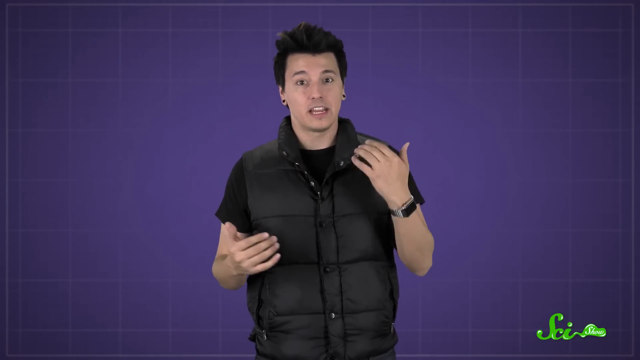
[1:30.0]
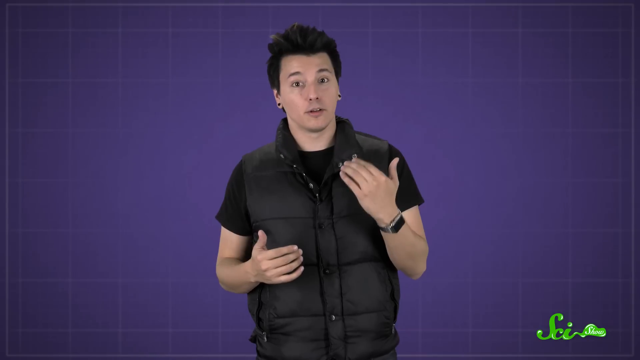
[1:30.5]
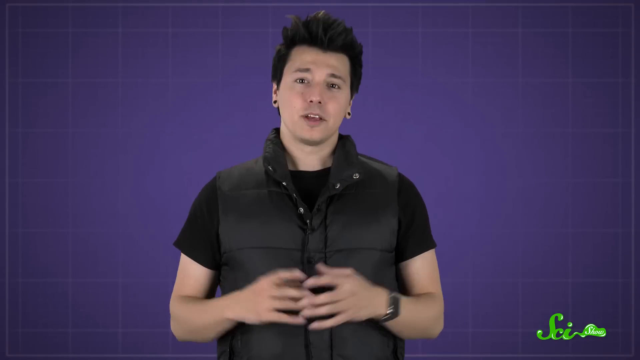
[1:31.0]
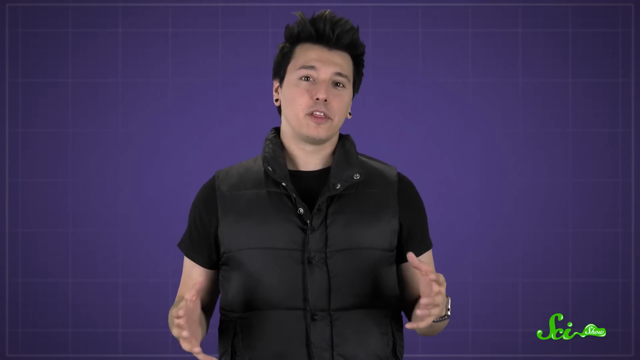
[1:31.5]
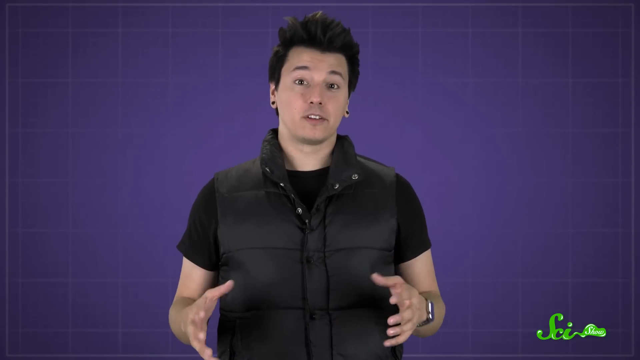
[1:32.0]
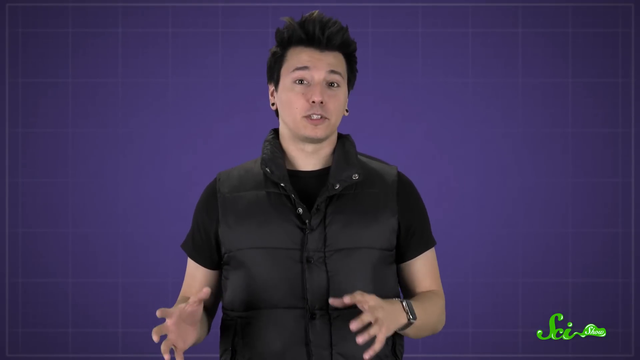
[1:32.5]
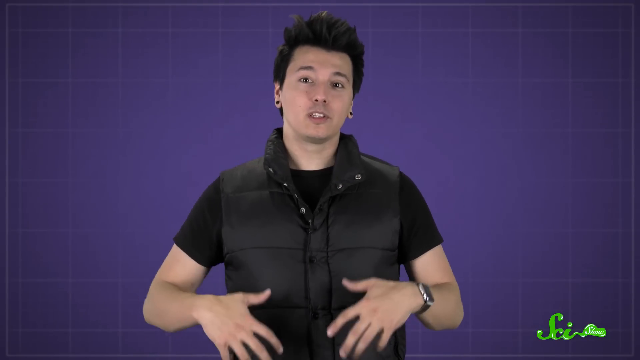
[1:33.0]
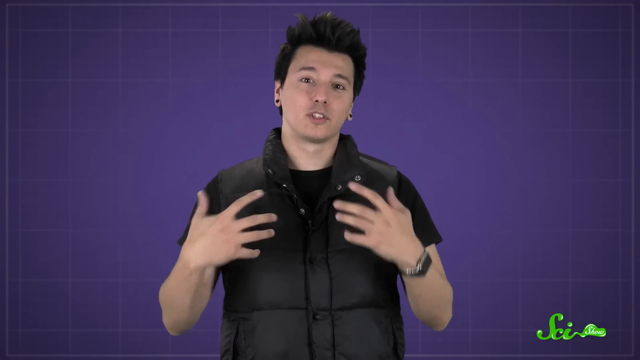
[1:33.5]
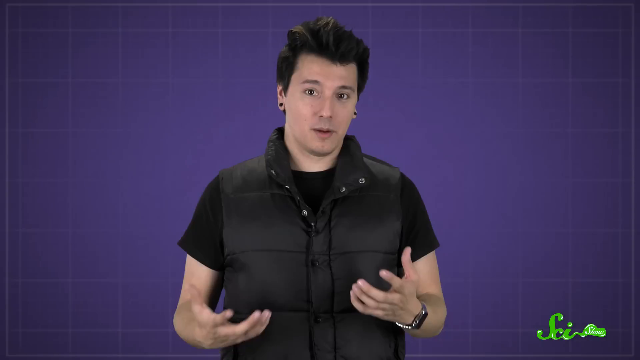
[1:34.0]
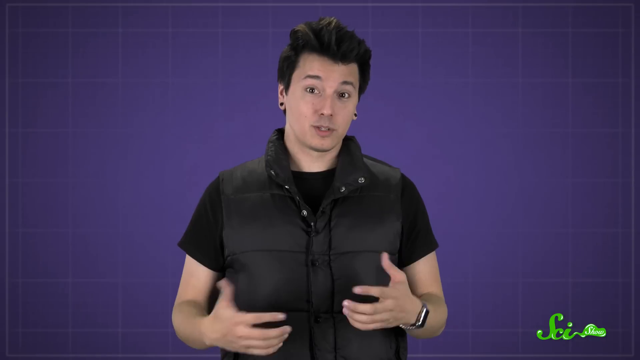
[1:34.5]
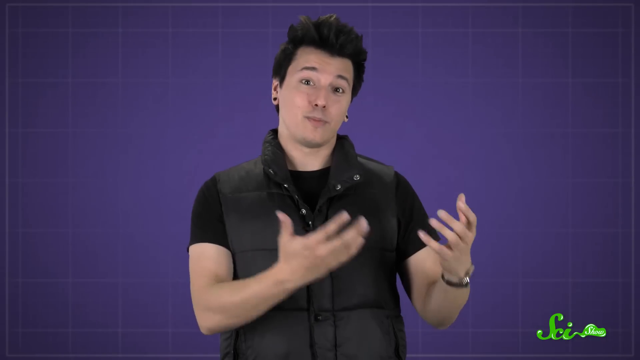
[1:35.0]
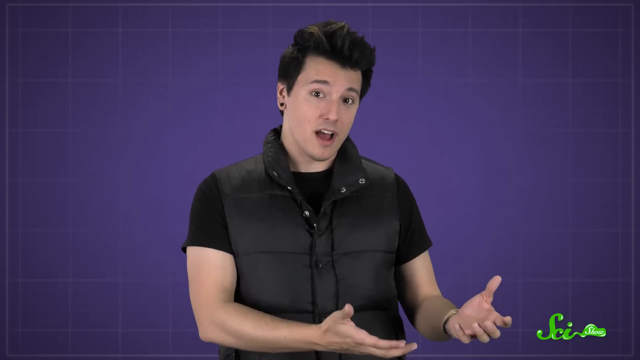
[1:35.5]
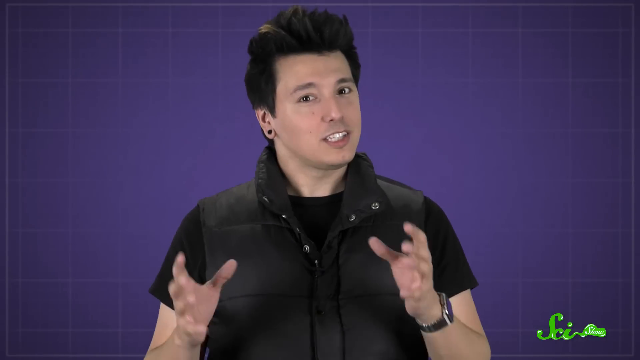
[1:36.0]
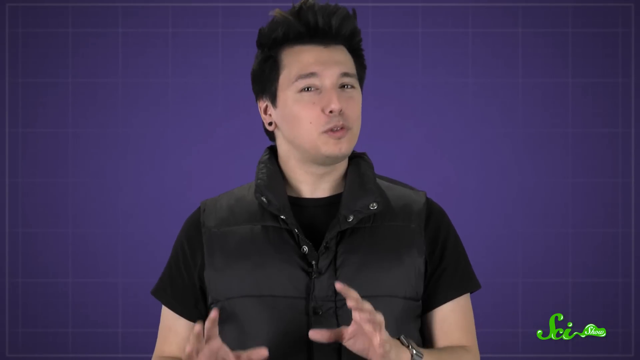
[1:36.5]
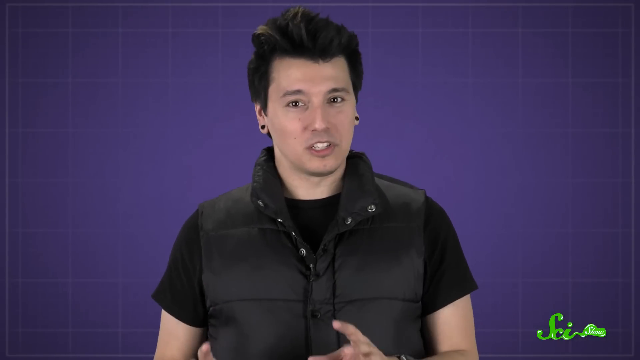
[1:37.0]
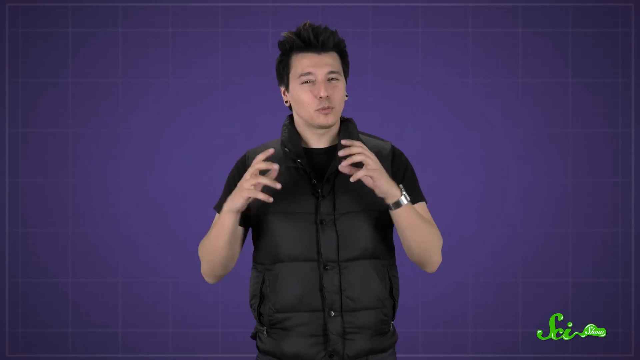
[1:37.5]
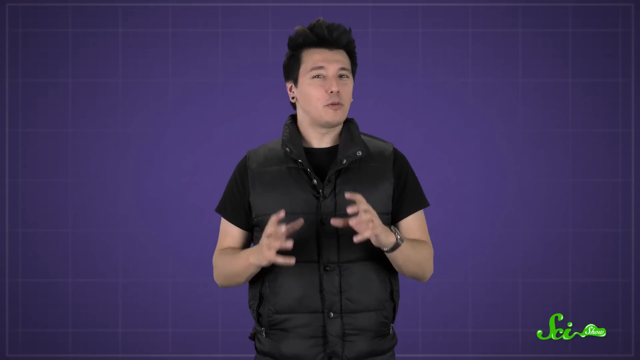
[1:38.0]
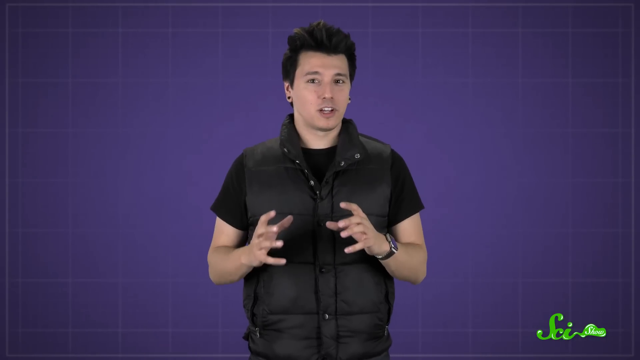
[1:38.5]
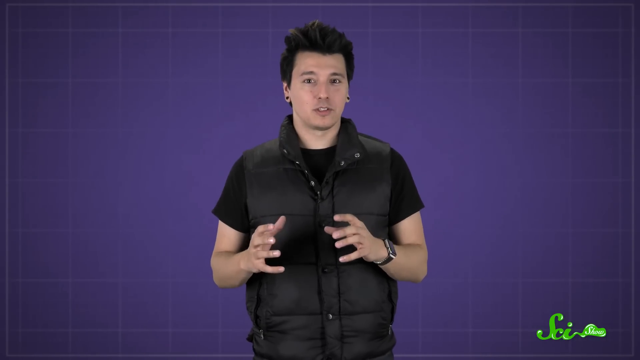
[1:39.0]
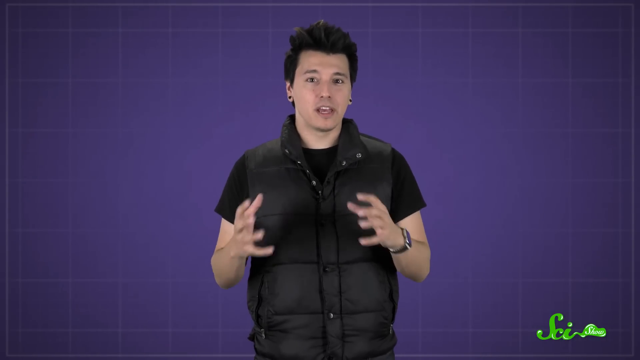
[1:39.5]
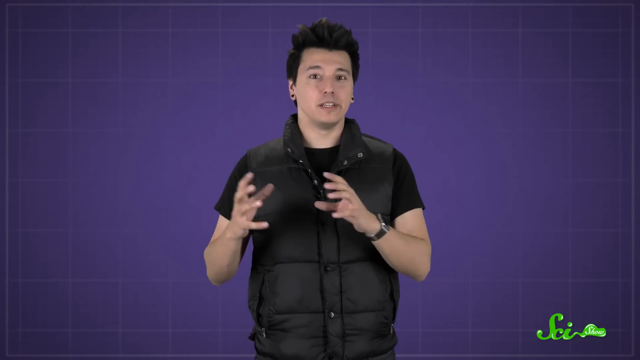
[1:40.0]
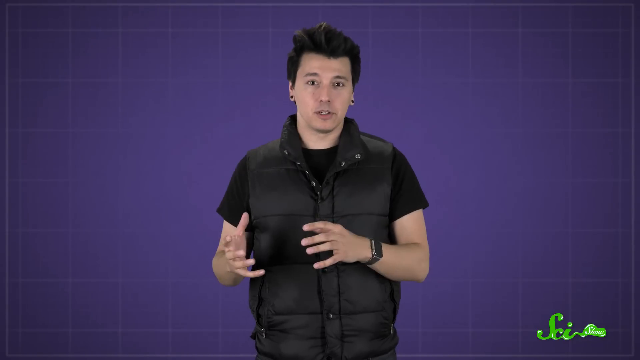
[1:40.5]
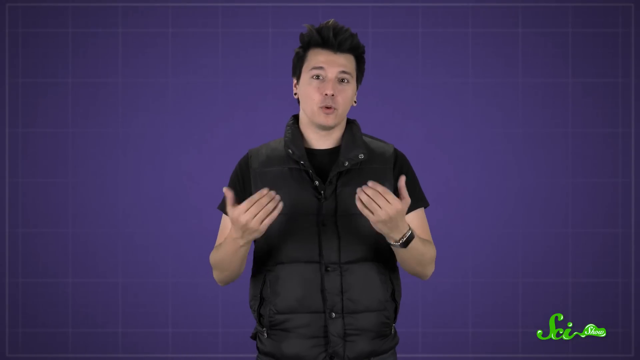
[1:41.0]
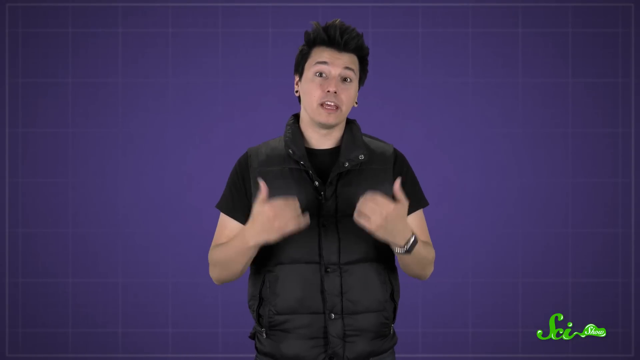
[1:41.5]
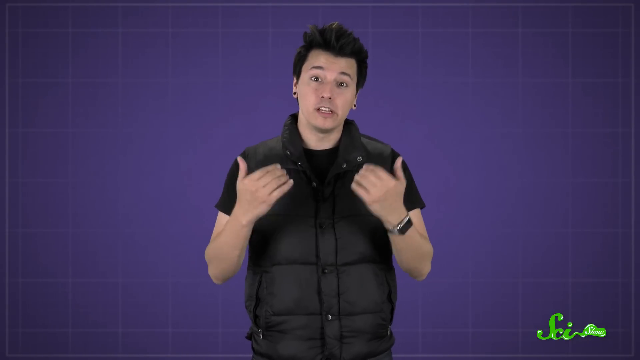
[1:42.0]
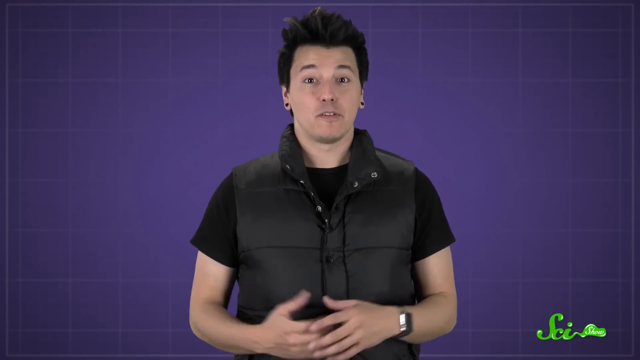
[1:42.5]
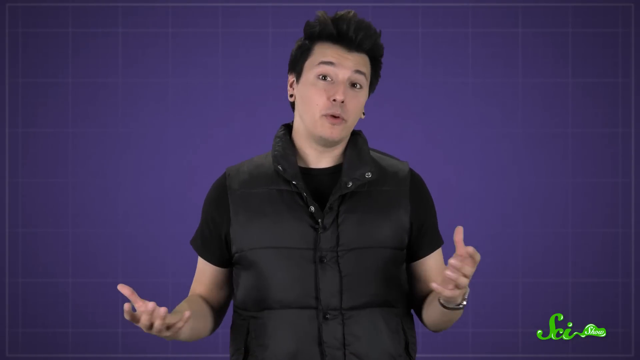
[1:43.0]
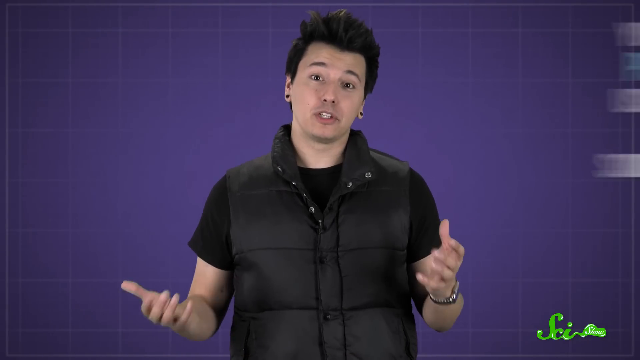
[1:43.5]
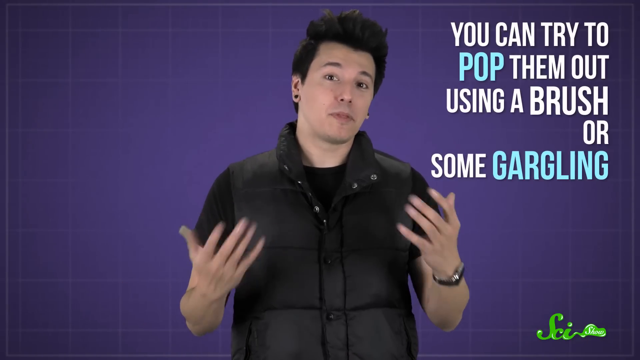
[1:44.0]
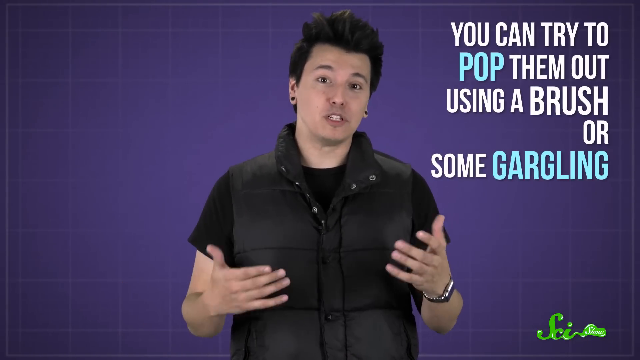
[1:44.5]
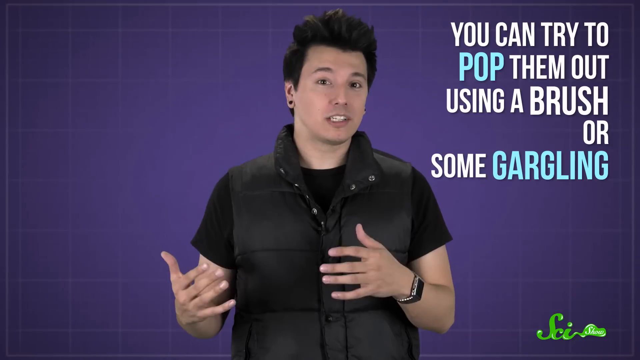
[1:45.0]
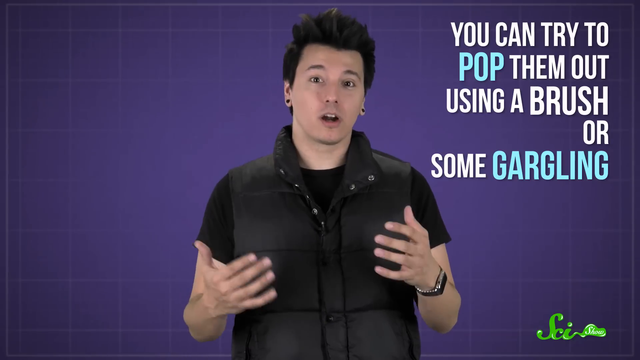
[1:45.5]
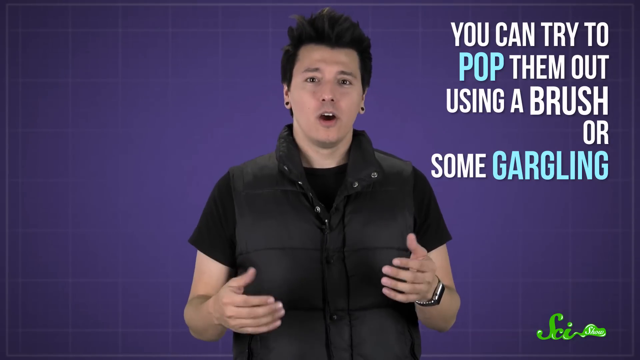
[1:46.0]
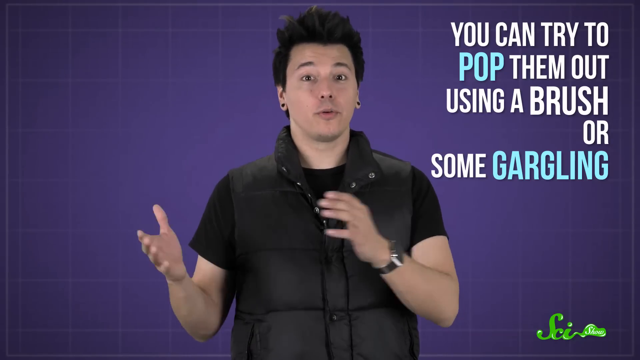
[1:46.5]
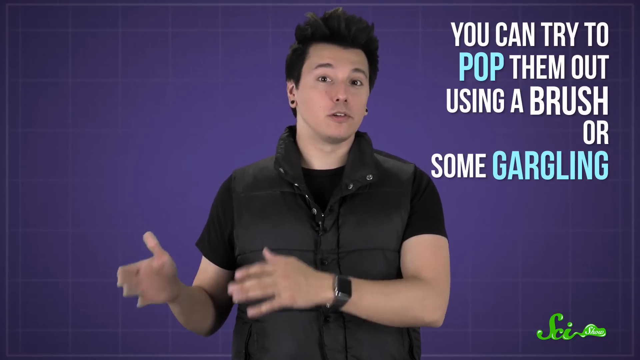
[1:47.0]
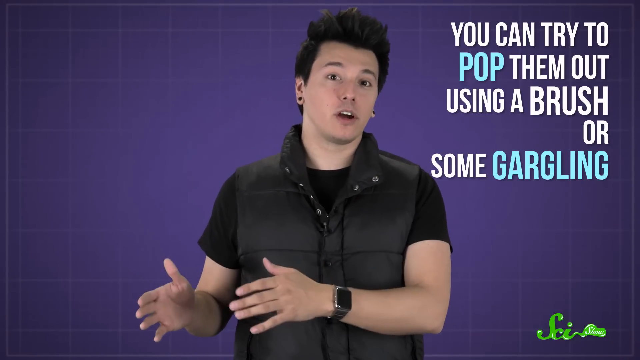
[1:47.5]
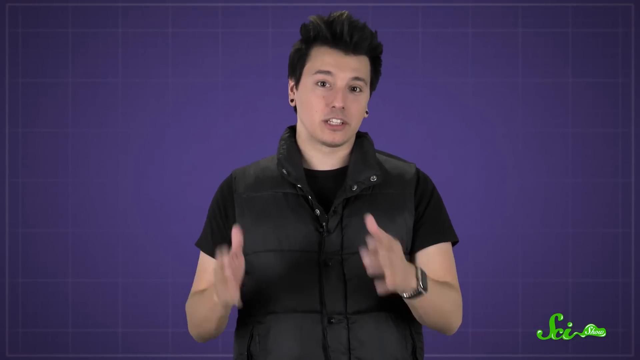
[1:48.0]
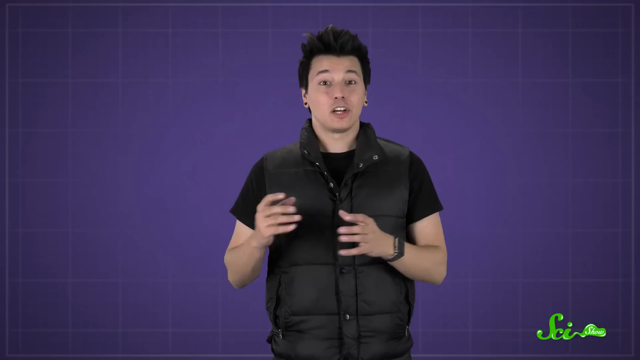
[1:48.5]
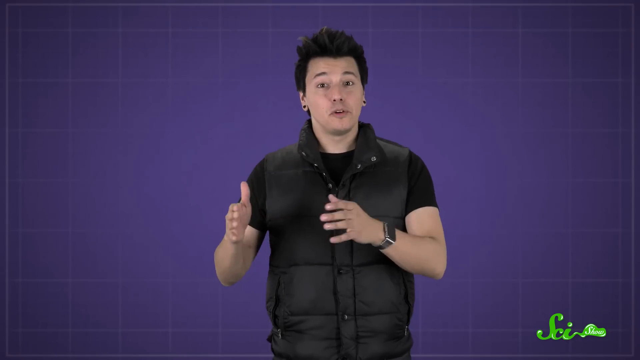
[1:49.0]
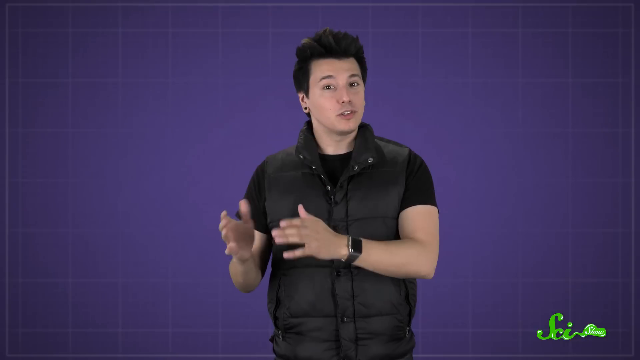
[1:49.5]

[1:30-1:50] A man talks directly toward the screen. He is Caucasian, with long hair flipped upward and two black earrings, and wears a black puffer vest, a black t-shirt, glasses, and a watch on one hand. He uses many hand gestures. Behind him is a purple grid background that is light purple in the middle and a dark shade of purple at the edges and corners.